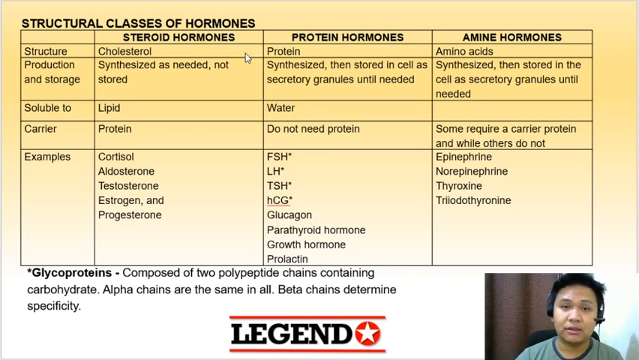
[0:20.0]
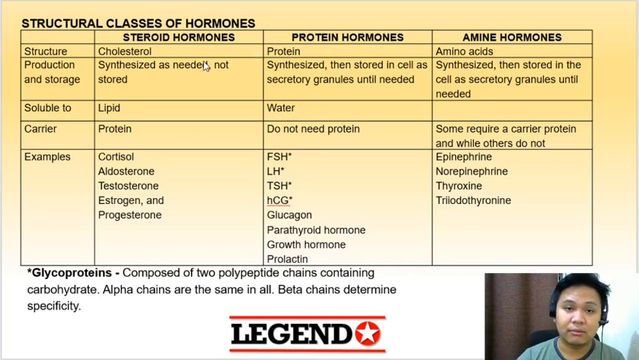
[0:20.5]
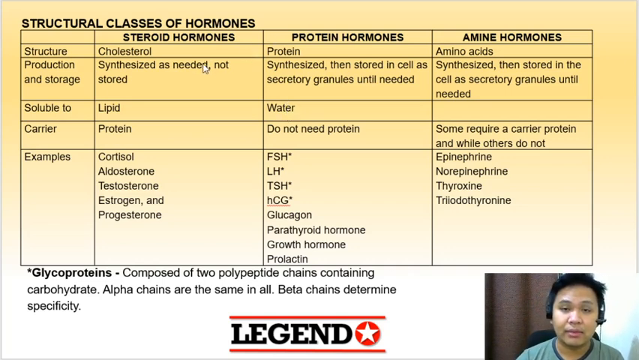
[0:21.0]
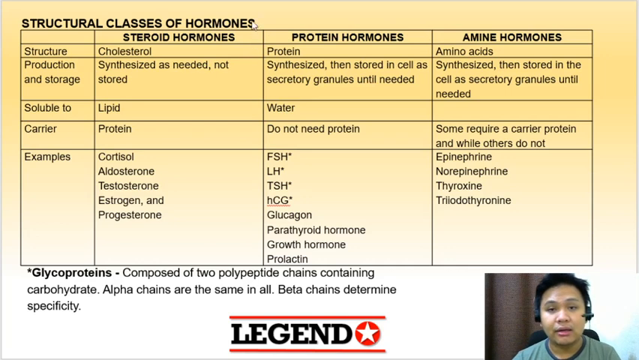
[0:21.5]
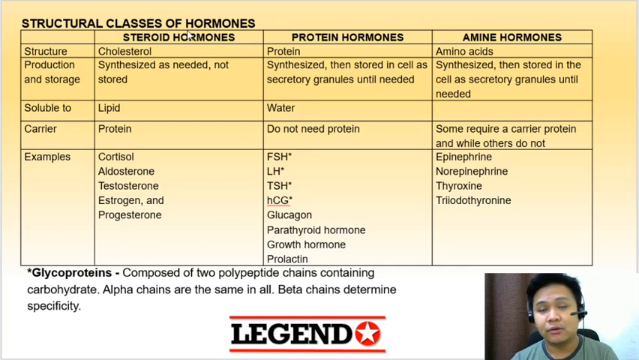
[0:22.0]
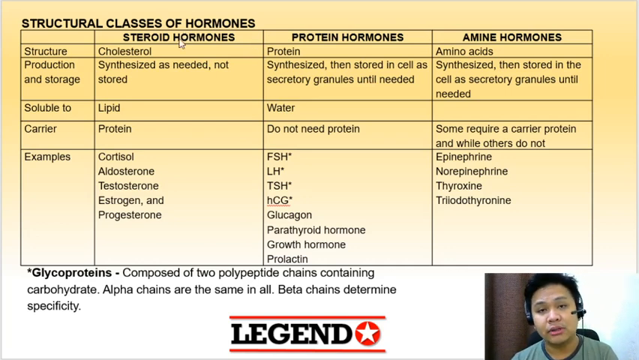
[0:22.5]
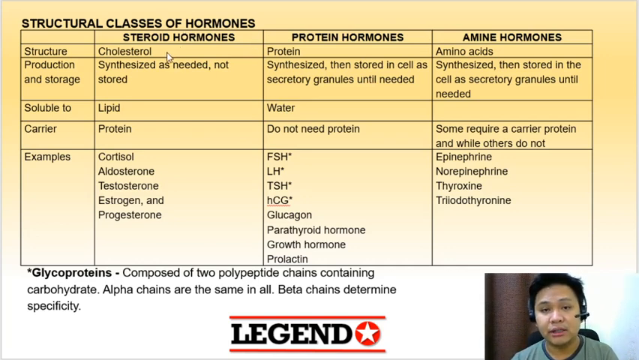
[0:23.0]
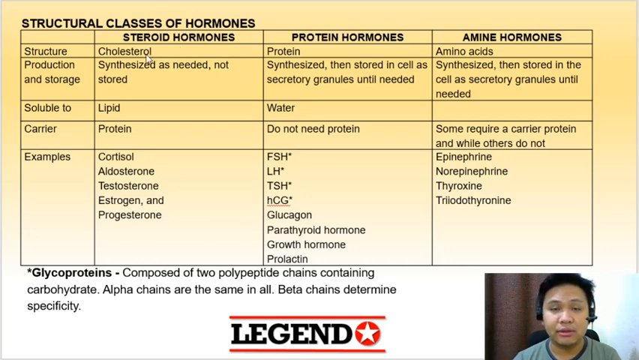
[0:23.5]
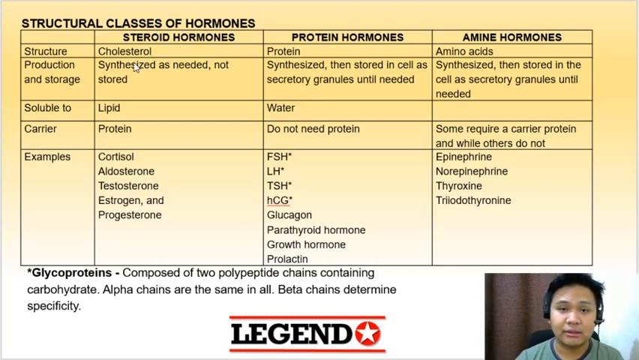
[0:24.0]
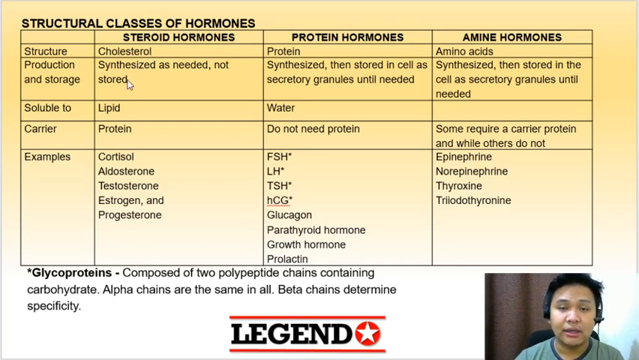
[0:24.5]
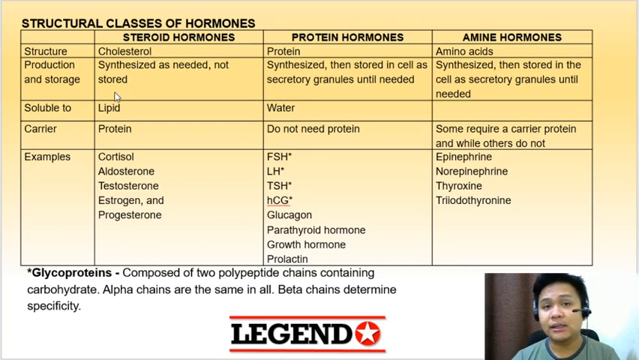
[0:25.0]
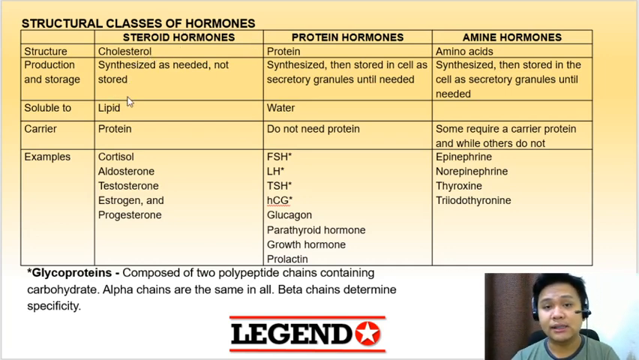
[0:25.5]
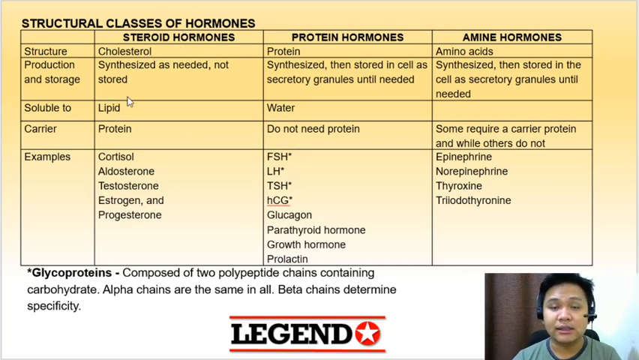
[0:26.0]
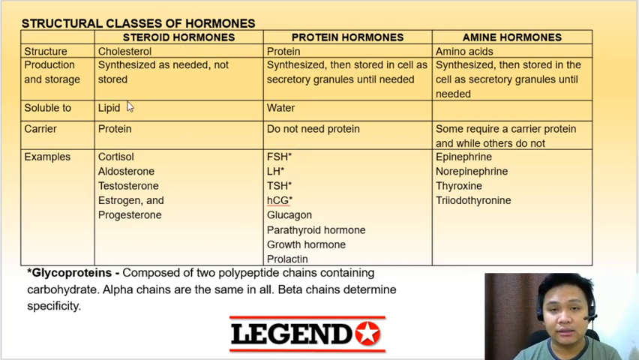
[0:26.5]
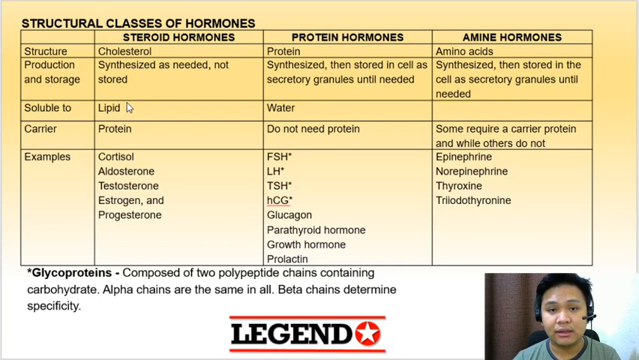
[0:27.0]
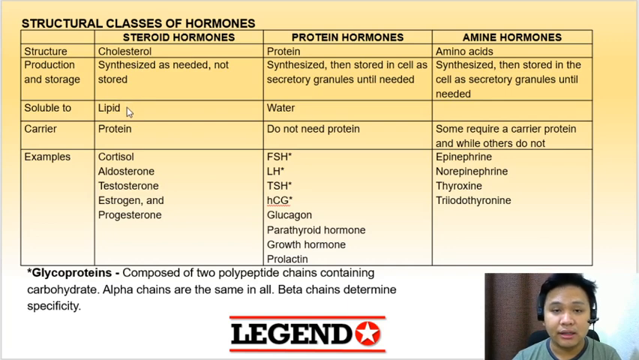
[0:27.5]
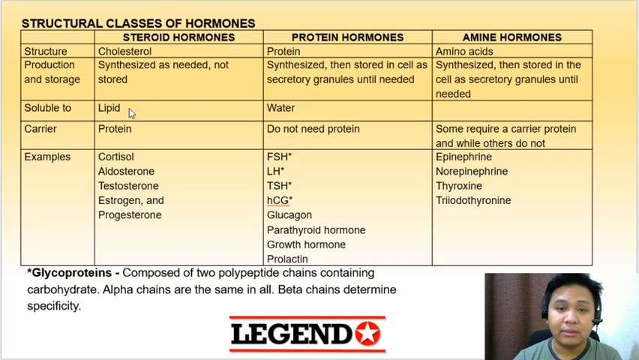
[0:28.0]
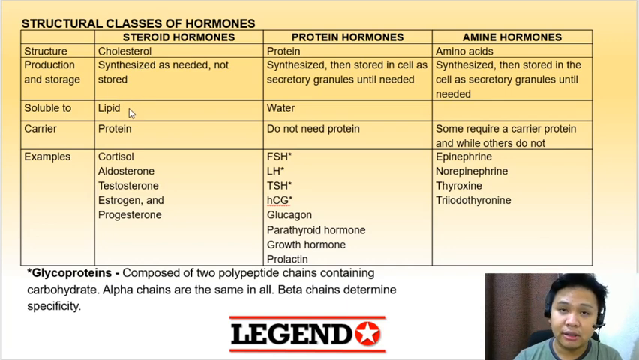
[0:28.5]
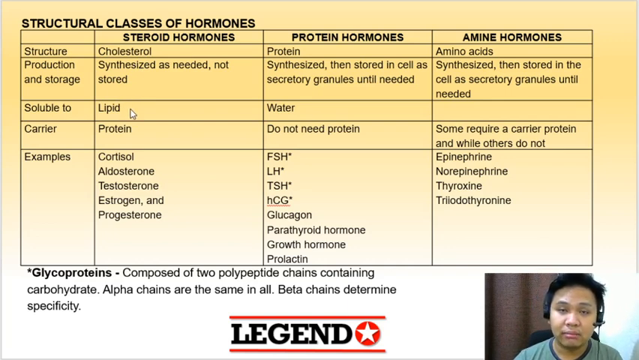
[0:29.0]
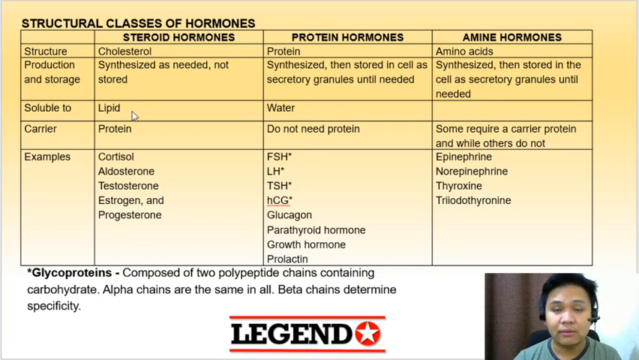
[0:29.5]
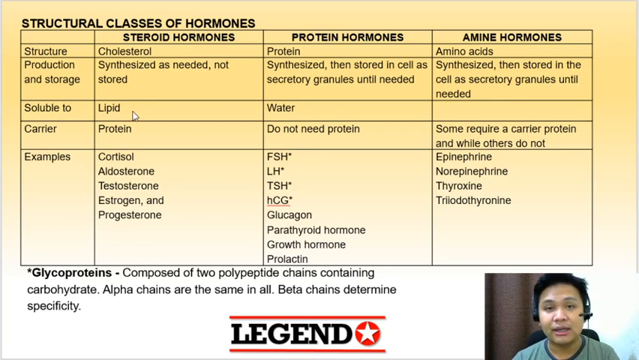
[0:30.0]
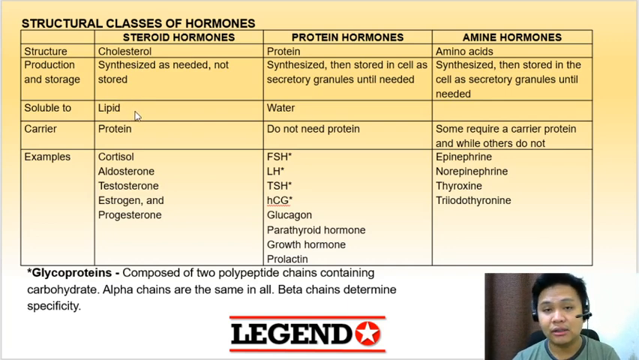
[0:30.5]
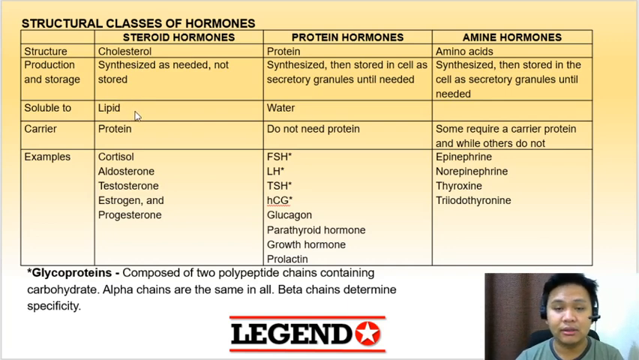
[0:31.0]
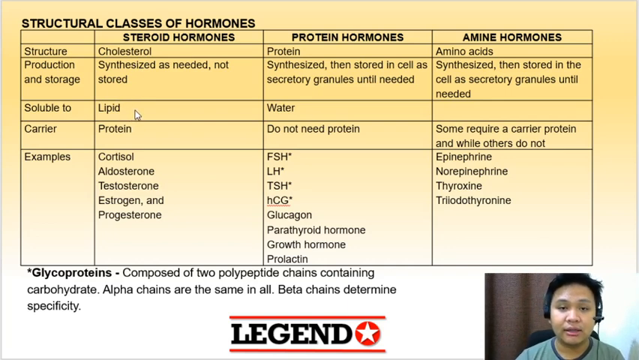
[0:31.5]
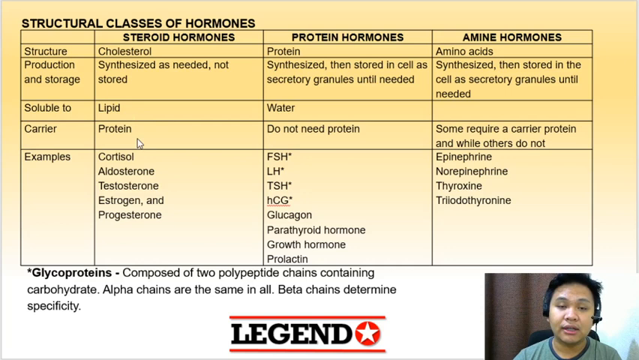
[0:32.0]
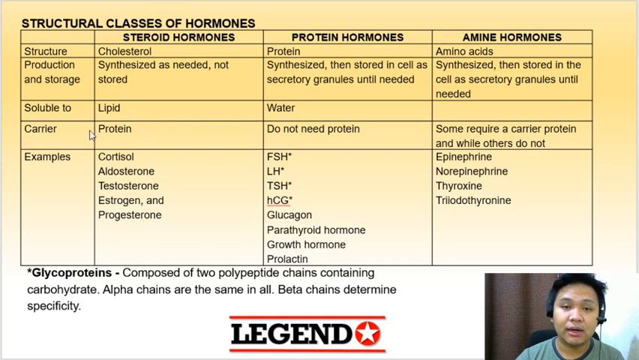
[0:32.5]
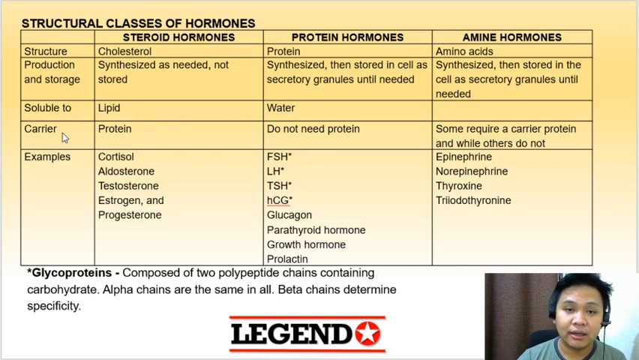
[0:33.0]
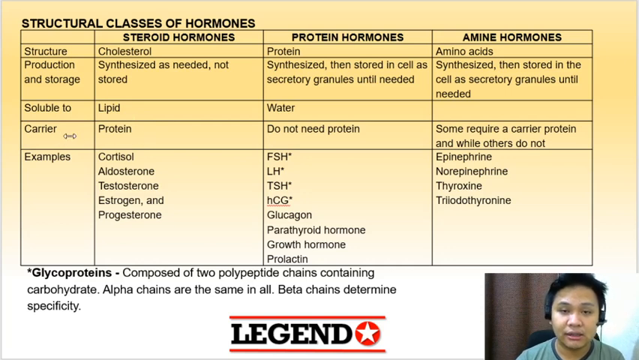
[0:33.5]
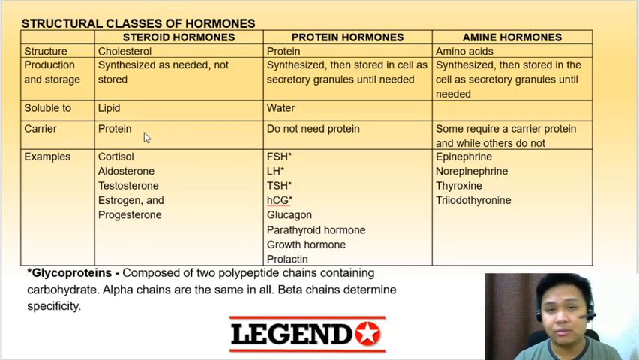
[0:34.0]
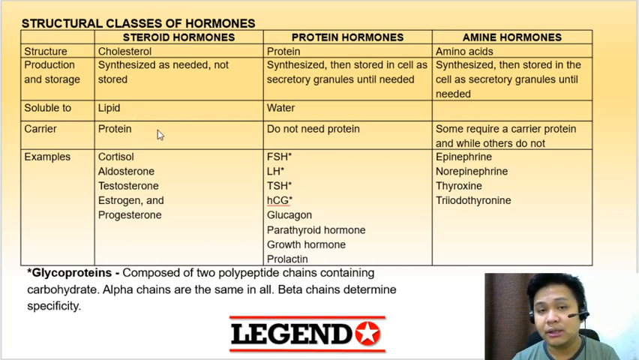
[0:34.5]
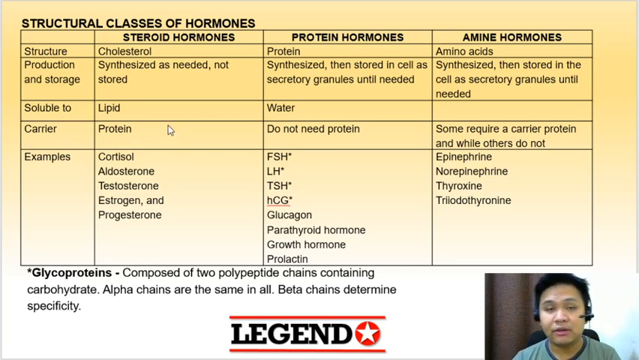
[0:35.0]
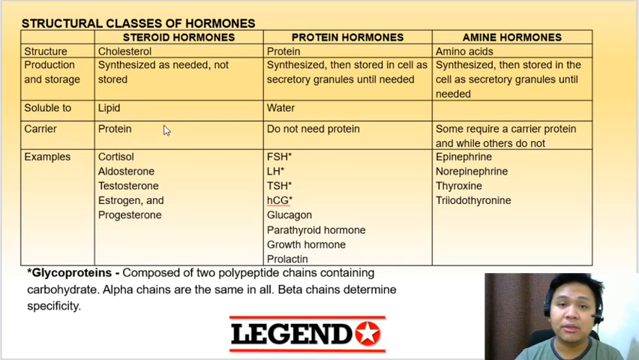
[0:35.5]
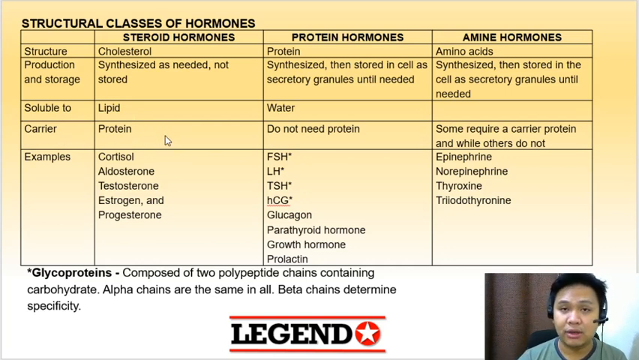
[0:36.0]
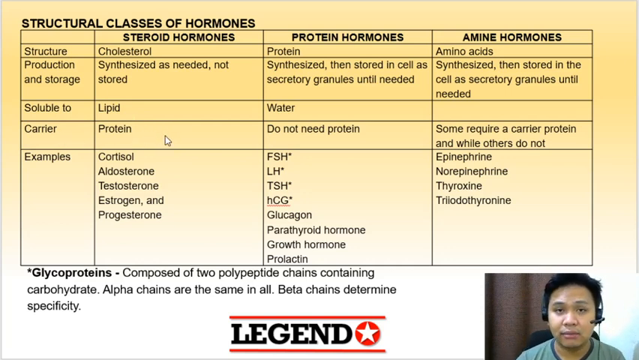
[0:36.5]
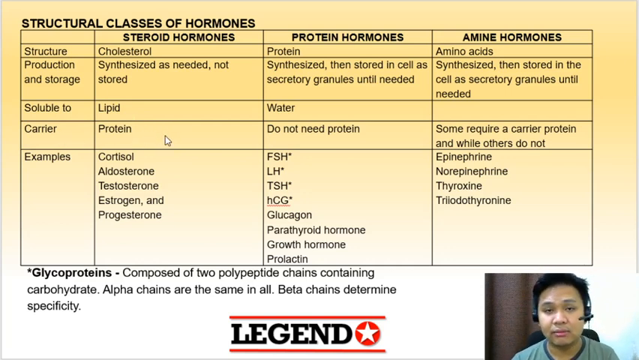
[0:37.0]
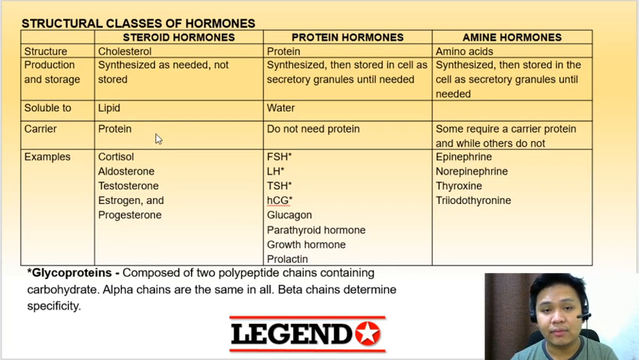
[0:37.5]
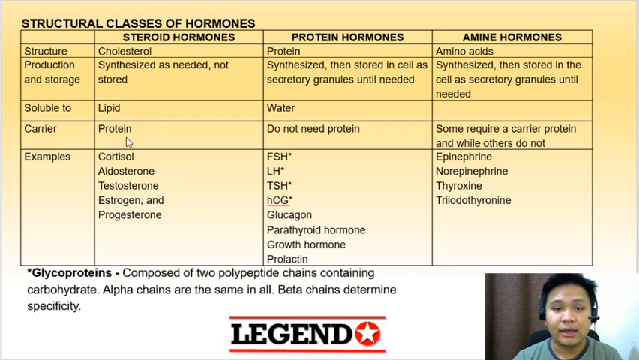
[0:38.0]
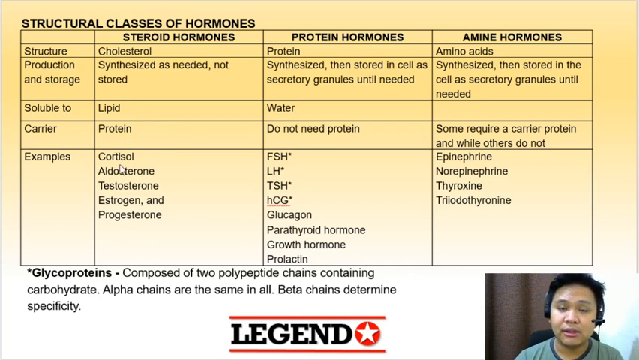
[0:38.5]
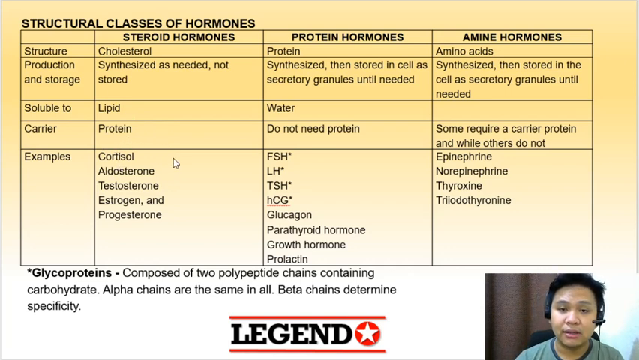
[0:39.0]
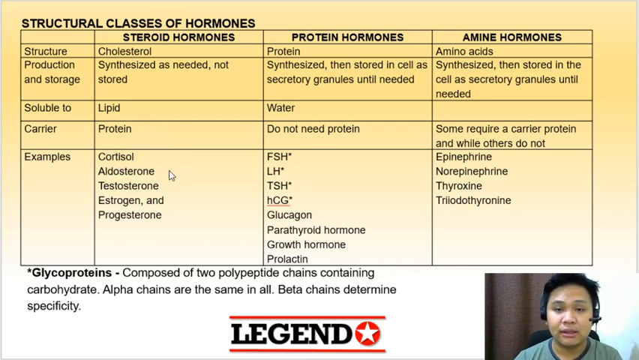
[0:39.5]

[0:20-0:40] The table on the structural classes of hormones is presented clearly on an orange background that is quite transparent, at around 50 percent transparency. It lists steroid hormones as cholesterol, protein hormones as protein, and amine hormones as amino acids. Under production and storage, cholesterol is "synthesized as needed, not stored"; protein is "synthesized then stored in cells as secretory granules until needed"; and amino acids are "synthesized then stored in the cell as secretory granules until needed". Steroid hormones are soluble to lipid and protein hormones to water, while no solubility information is given for amine hormones. The carrier for steroid hormones is protein; for protein hormones the carrier entry indicates they do not need protein; and for amine hormones it says "some require a carrier protein while others do not".